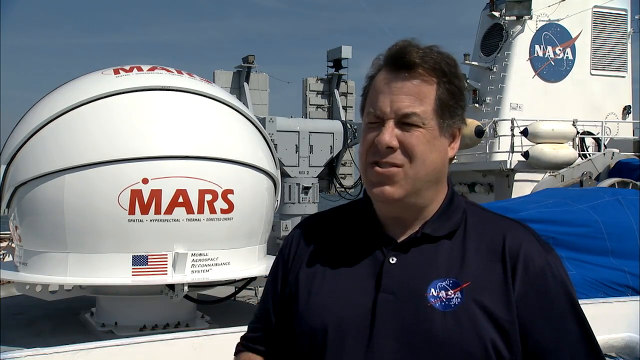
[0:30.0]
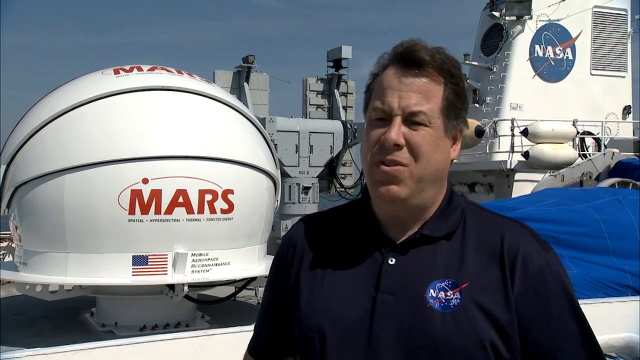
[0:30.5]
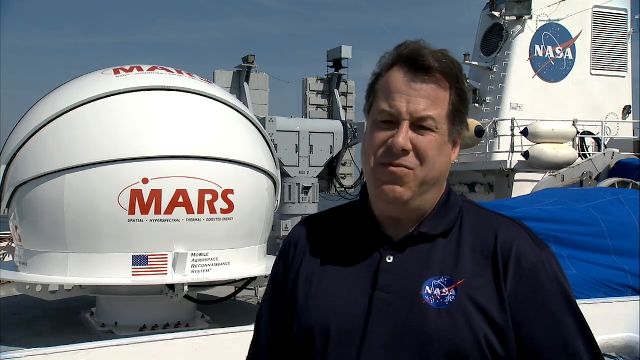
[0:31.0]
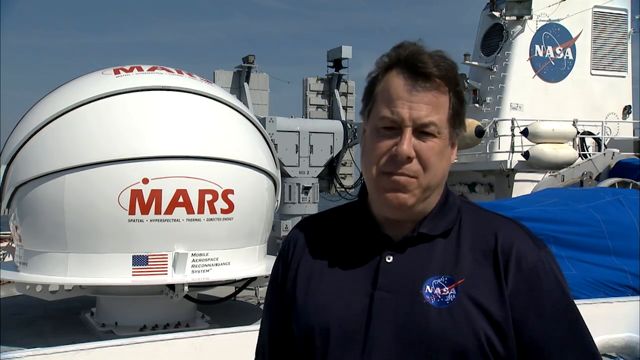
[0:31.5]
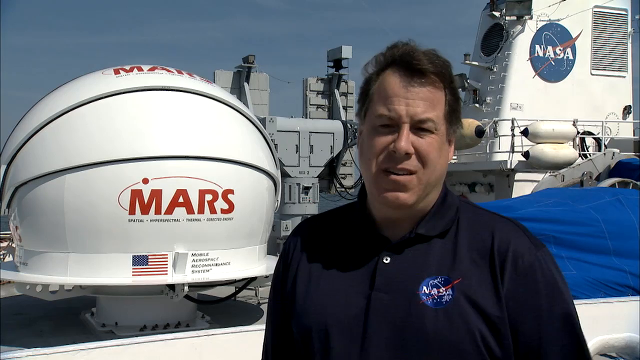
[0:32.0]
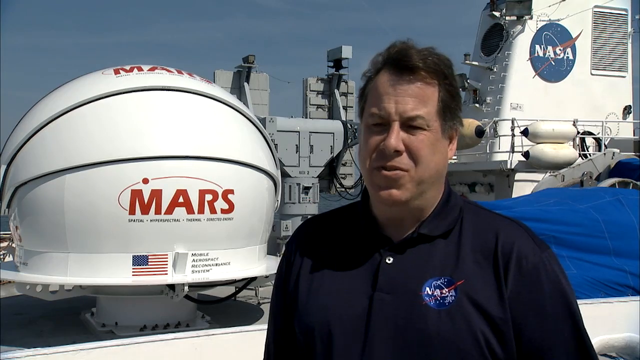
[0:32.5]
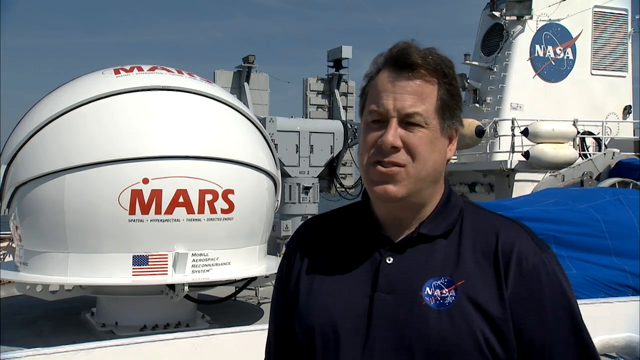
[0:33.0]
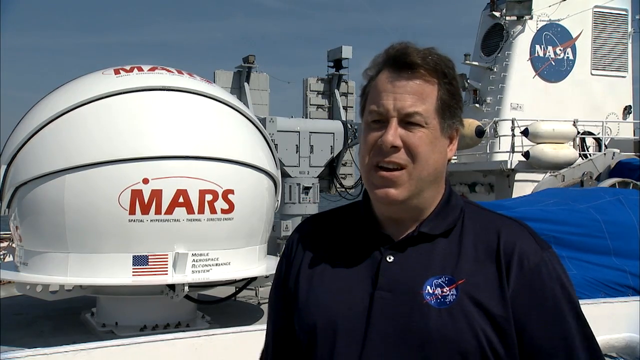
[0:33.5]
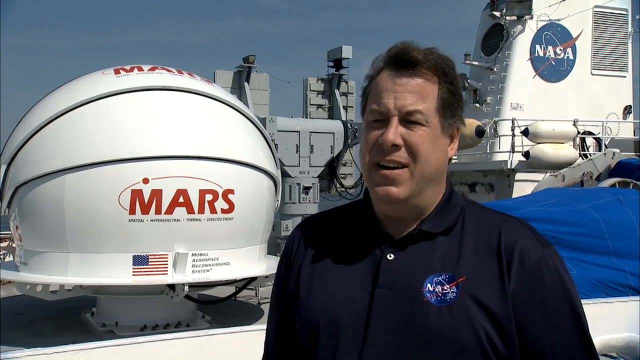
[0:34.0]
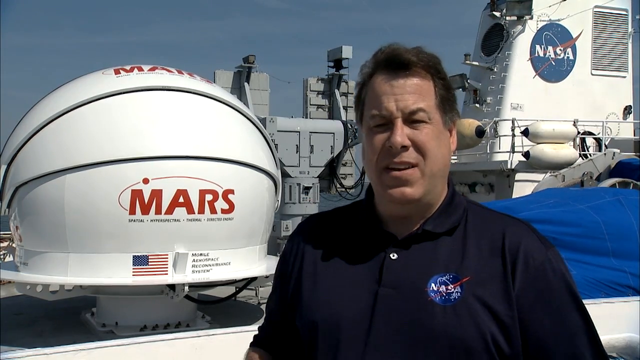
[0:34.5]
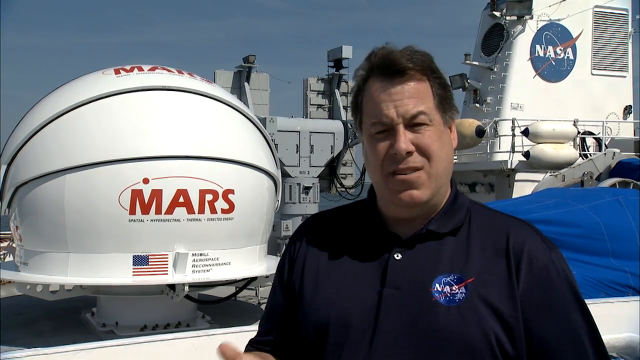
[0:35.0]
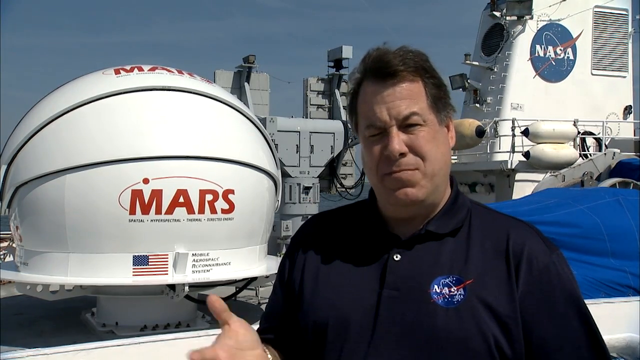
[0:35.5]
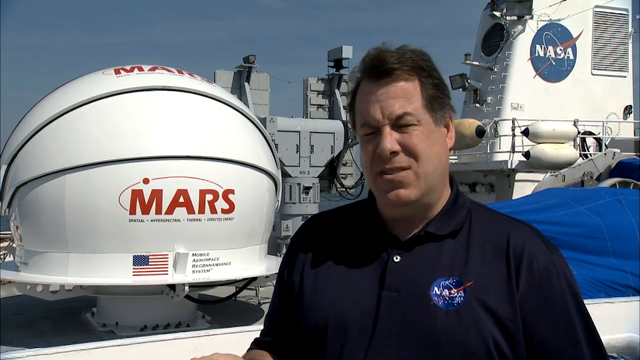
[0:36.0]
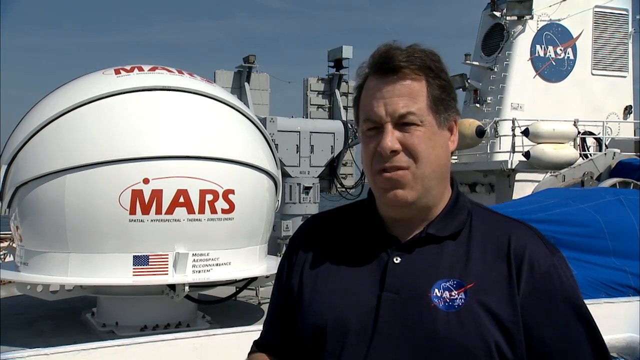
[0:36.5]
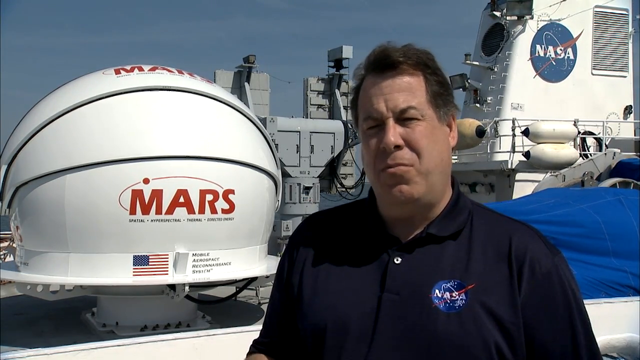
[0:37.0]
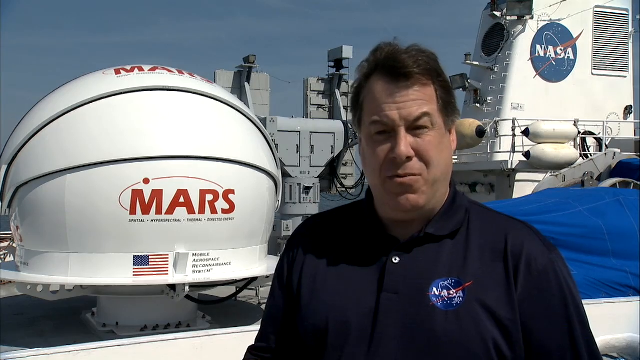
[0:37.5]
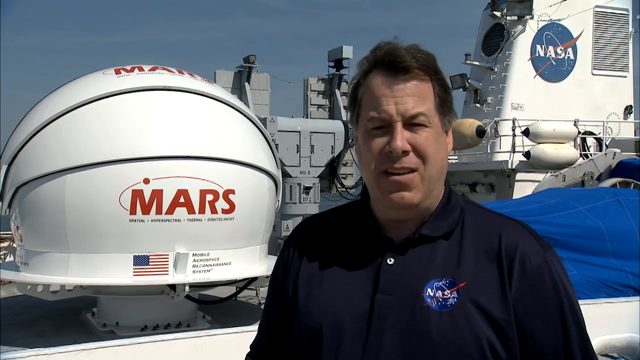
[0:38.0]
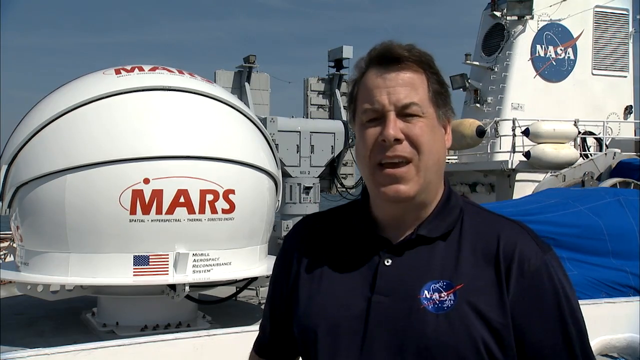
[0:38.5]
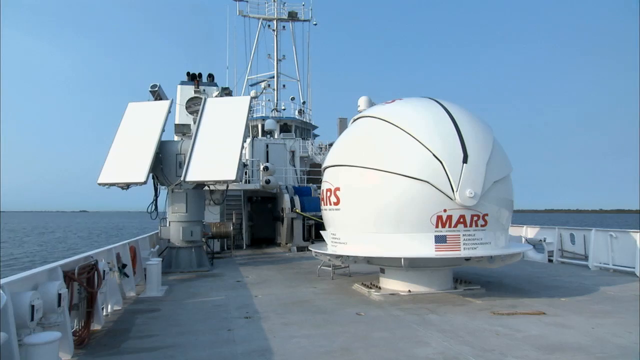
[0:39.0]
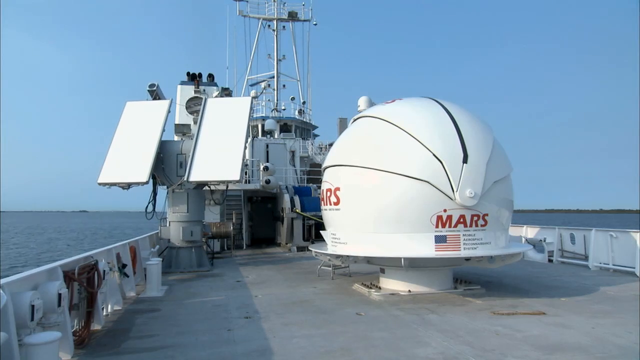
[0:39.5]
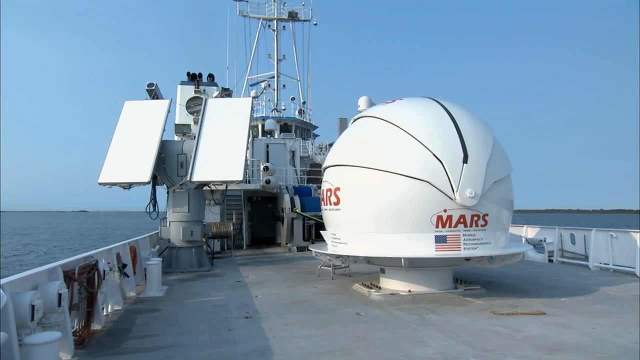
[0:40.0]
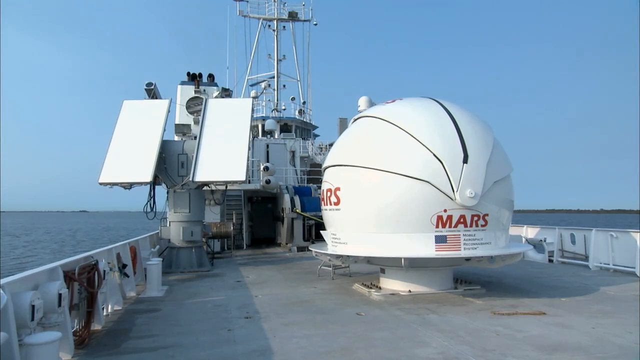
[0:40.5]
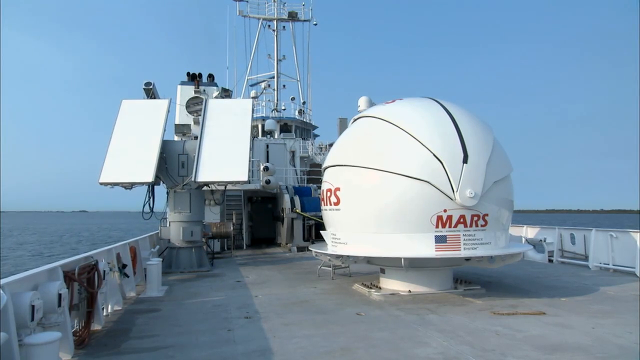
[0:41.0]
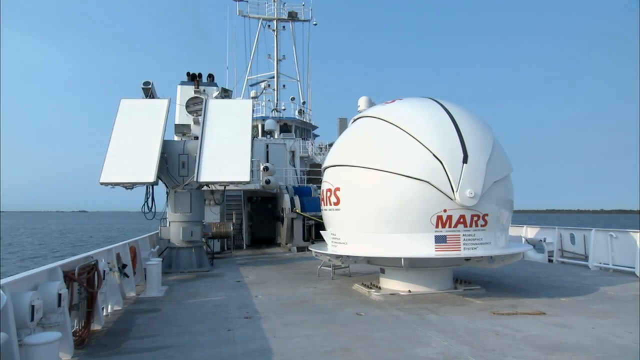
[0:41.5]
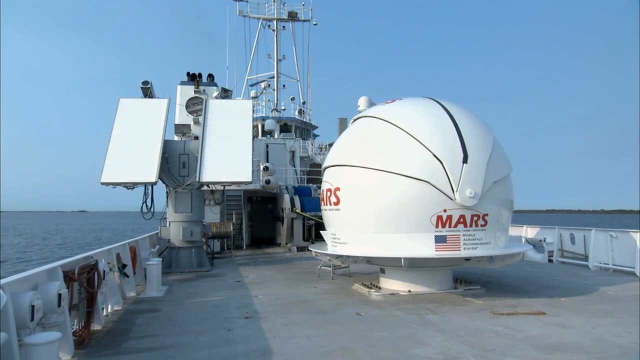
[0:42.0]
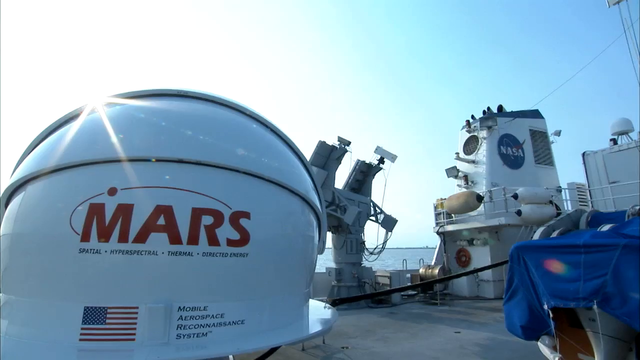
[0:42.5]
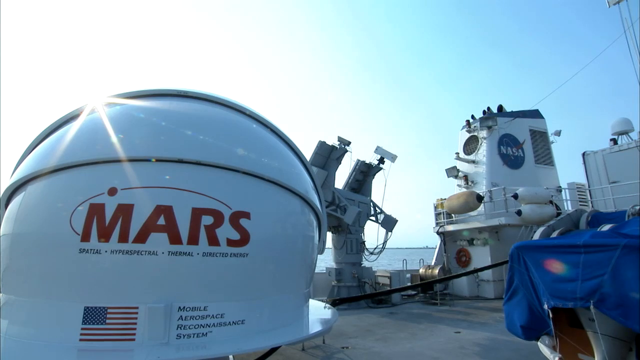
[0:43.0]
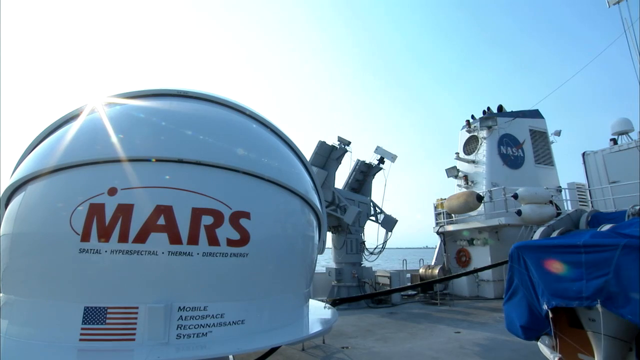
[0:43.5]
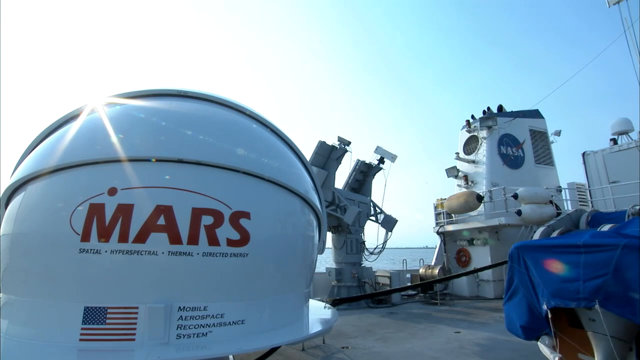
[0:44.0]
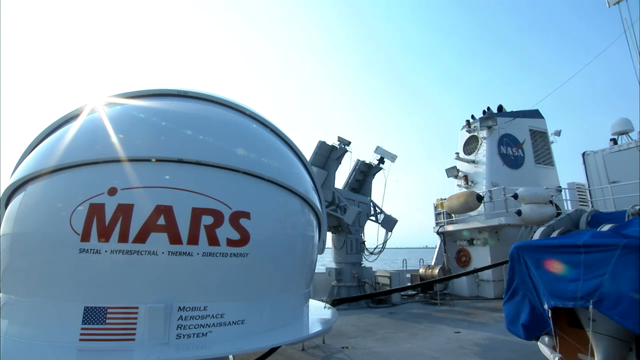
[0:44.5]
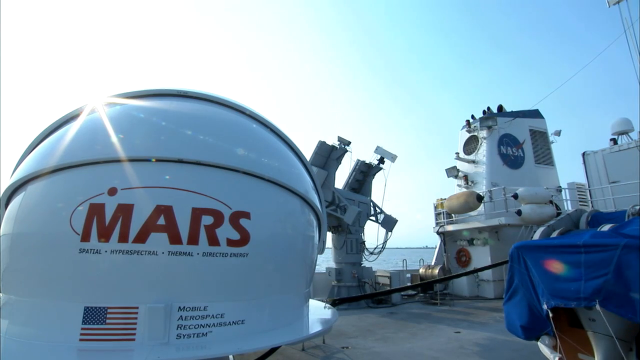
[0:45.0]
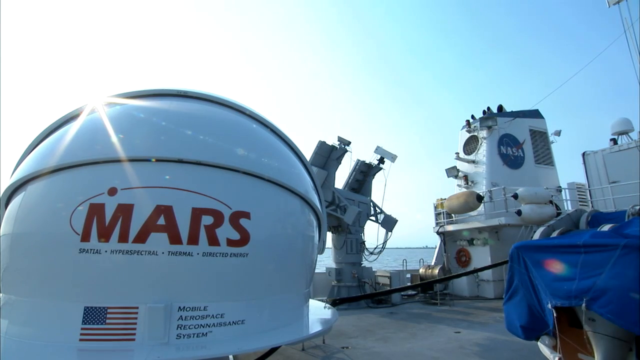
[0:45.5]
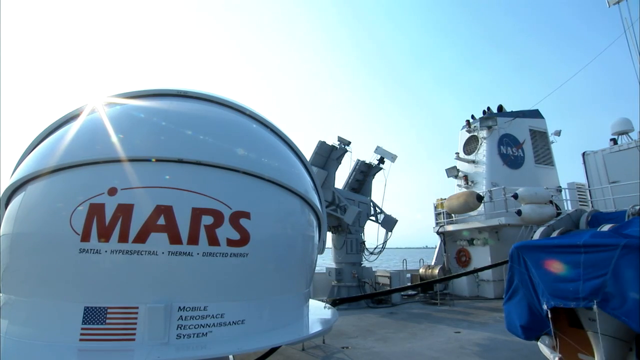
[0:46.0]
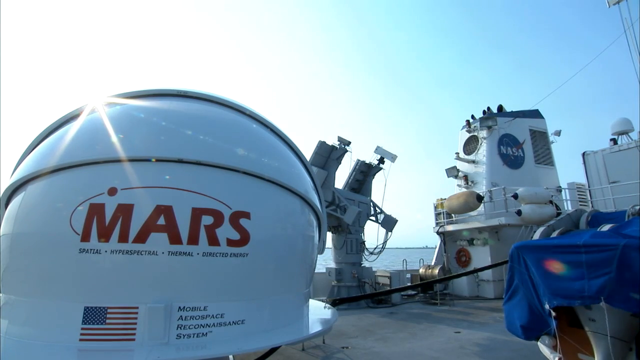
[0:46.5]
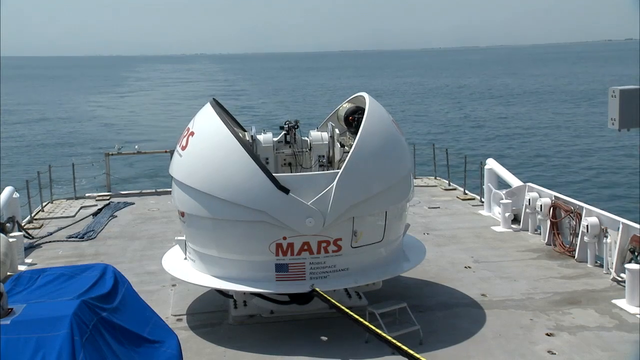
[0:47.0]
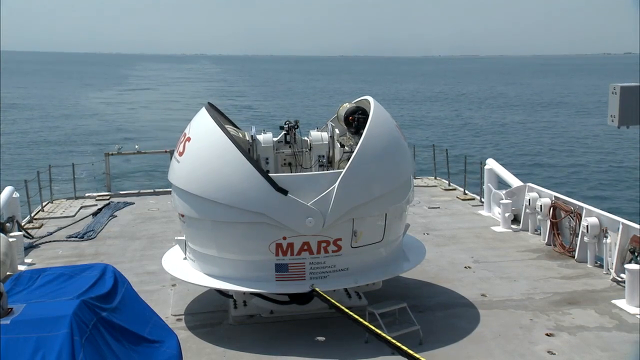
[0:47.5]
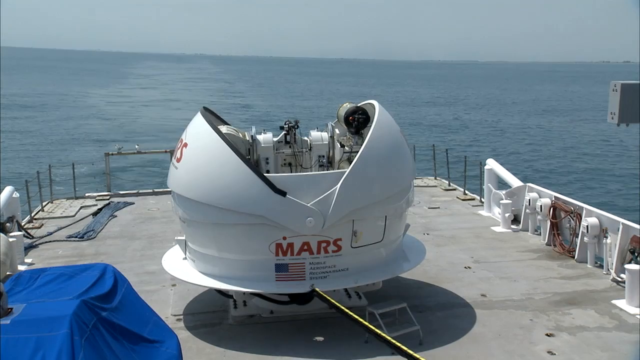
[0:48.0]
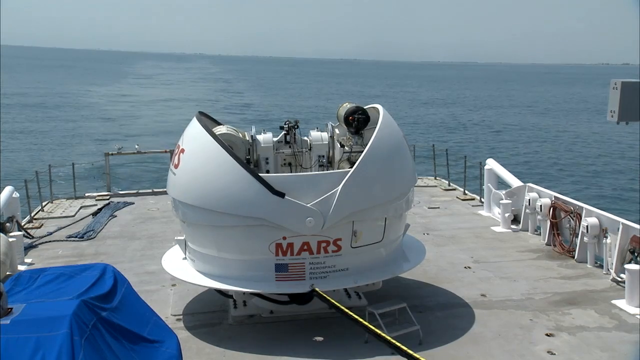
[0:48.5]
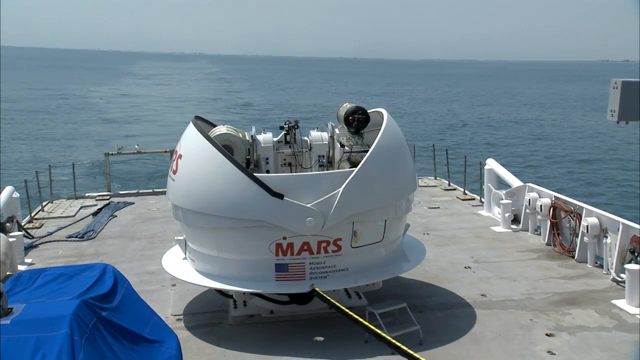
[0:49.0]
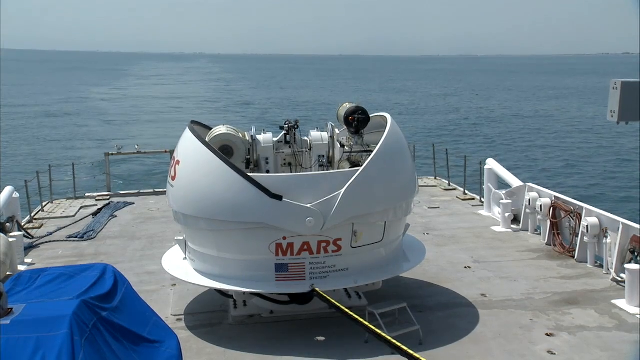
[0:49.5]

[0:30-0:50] The man keeps talking to the camera, positioned kind of right of center, his hair kind of blowing in the wind. He wears a black polo shirt with a NASA logo on the right side of his chest. The Mars dome or sphere in the background has a little American flag at the bottom. The view switches to the same dome on the ship, which is some kind of NASA ship with equipment on it for viewing. Two large plates or panels rotate on the ship. Then the white sphere that says "Mars" with the flag is seen opening up like jaws, with the sea in the background, revealing various instruments in the middle that look like instruments and tools used to take certain readings. A bit of blue tarp is visible in the lower left corner, and the sky is kind of a gray-blue. In the view of the Mars dome before the jaws open, the blue tarp is at the lower right.